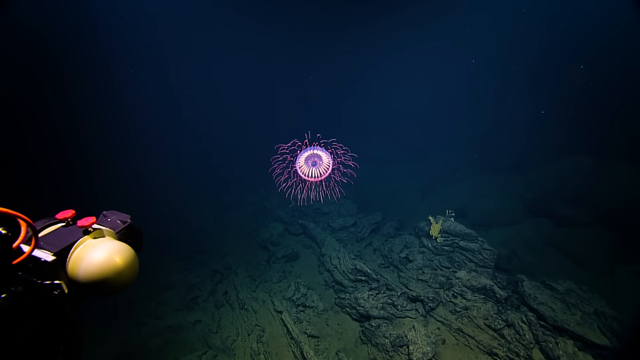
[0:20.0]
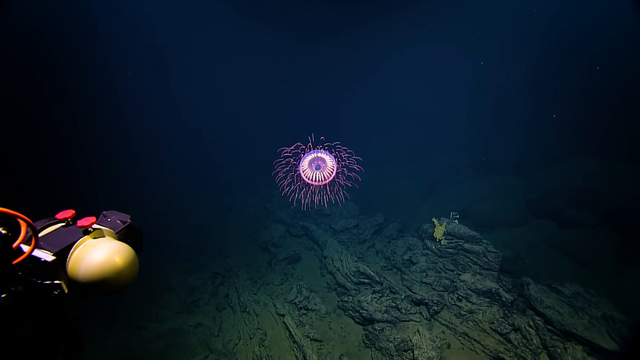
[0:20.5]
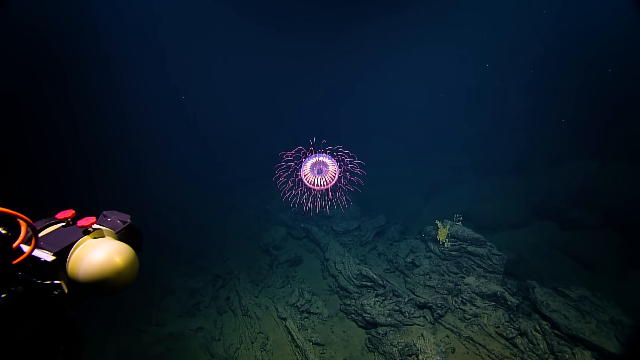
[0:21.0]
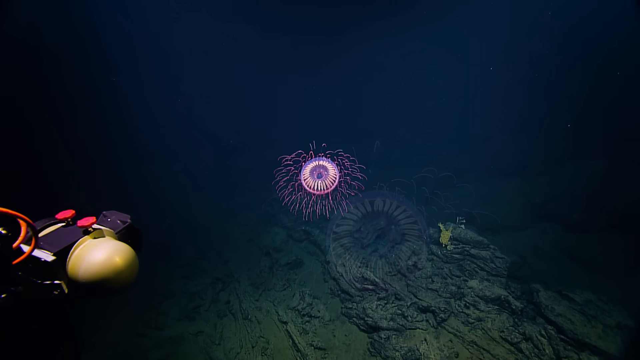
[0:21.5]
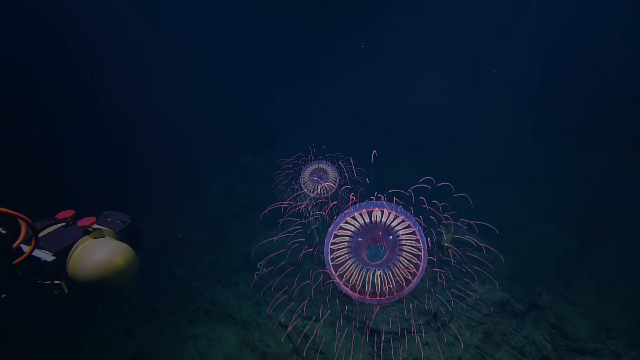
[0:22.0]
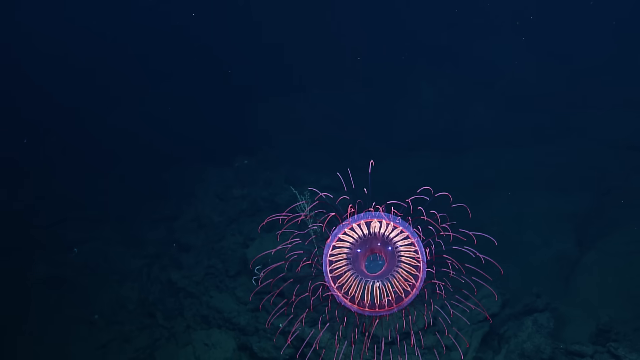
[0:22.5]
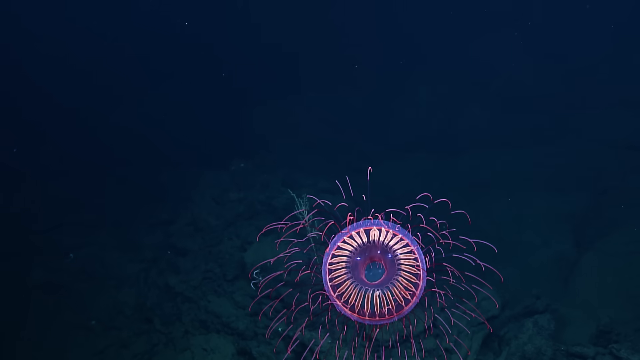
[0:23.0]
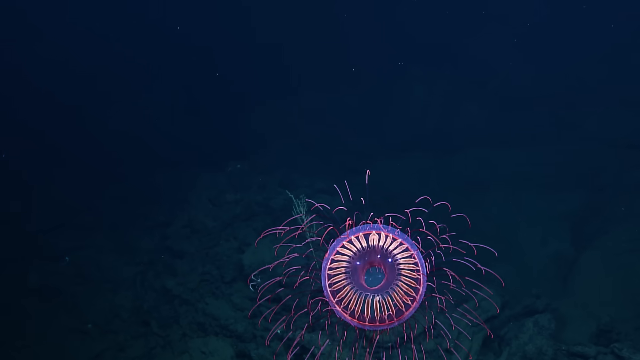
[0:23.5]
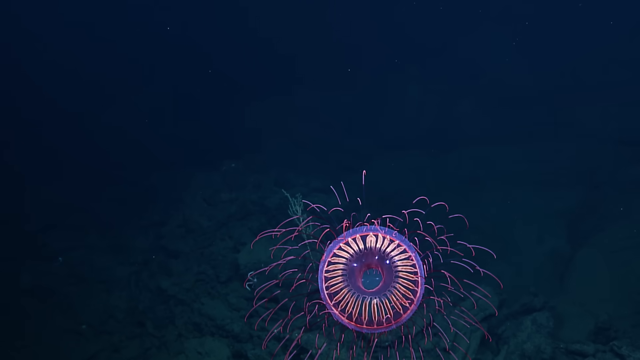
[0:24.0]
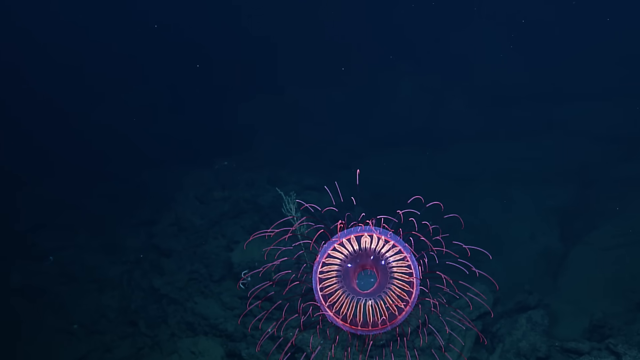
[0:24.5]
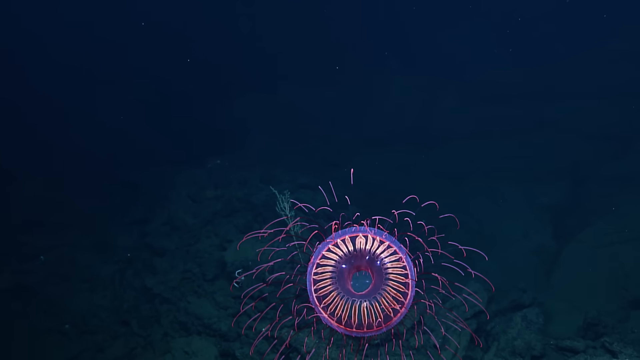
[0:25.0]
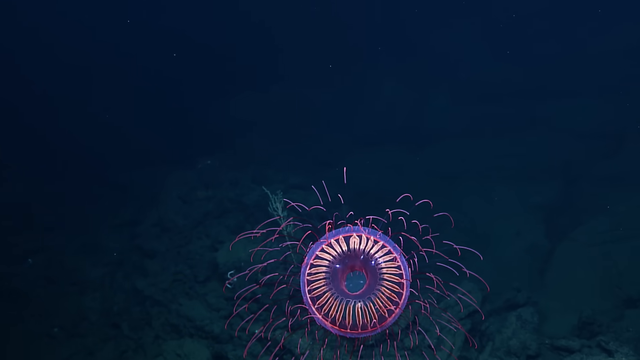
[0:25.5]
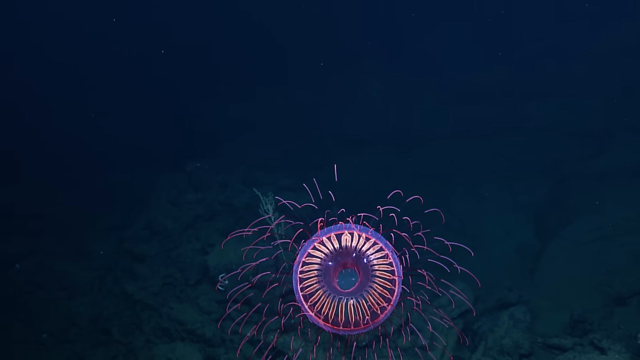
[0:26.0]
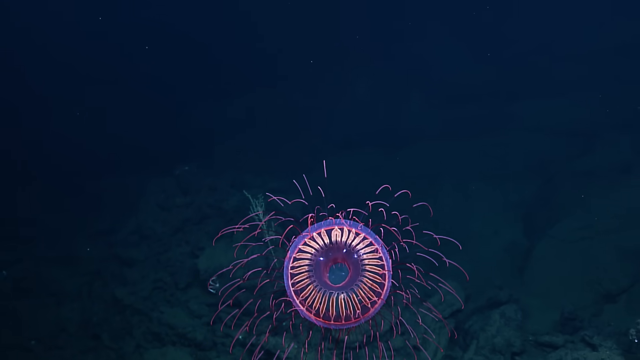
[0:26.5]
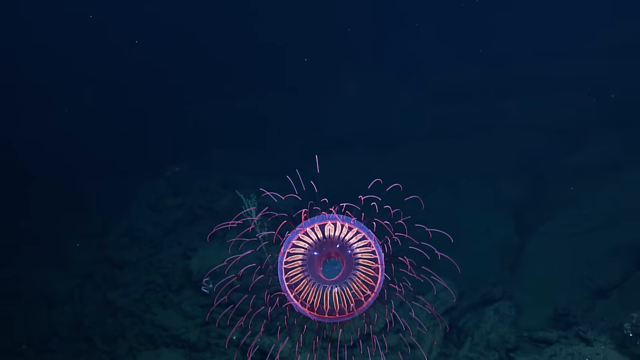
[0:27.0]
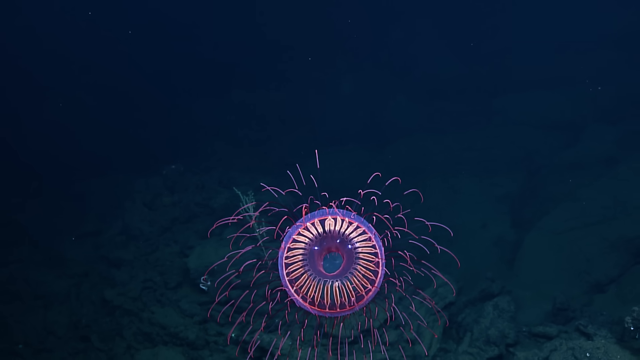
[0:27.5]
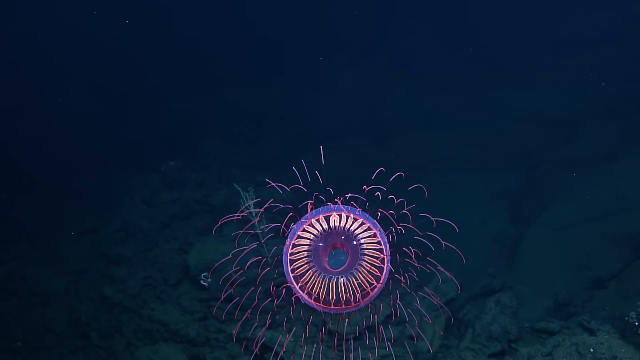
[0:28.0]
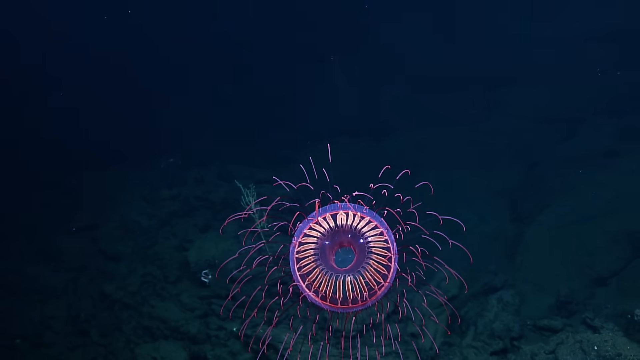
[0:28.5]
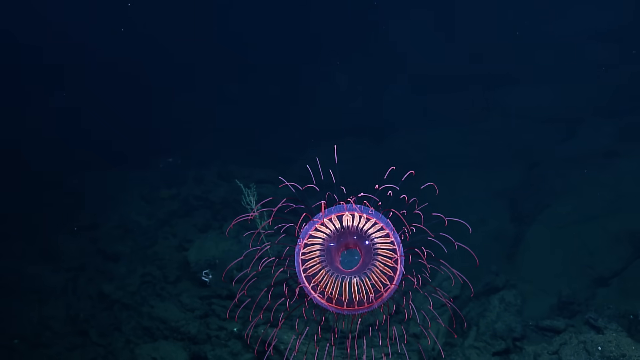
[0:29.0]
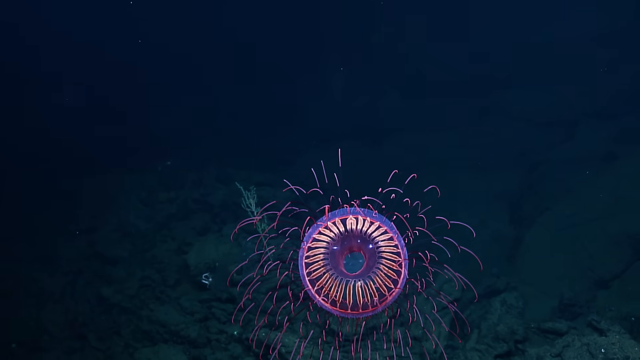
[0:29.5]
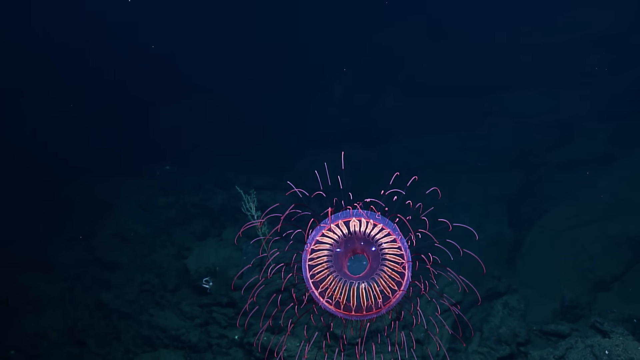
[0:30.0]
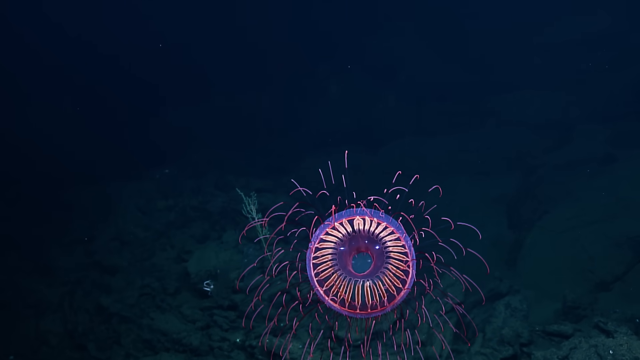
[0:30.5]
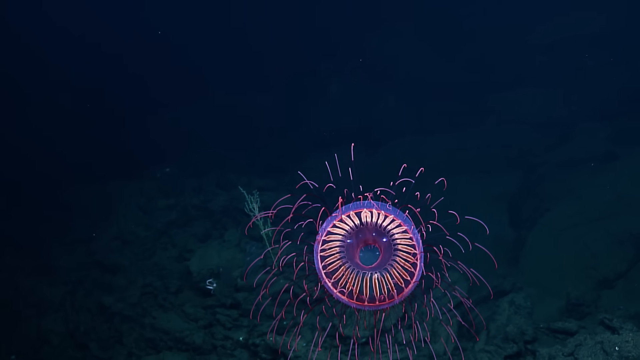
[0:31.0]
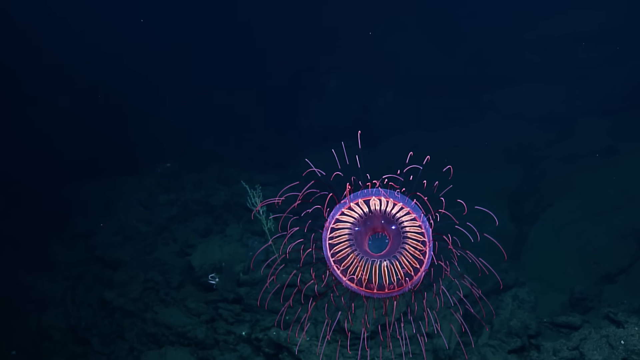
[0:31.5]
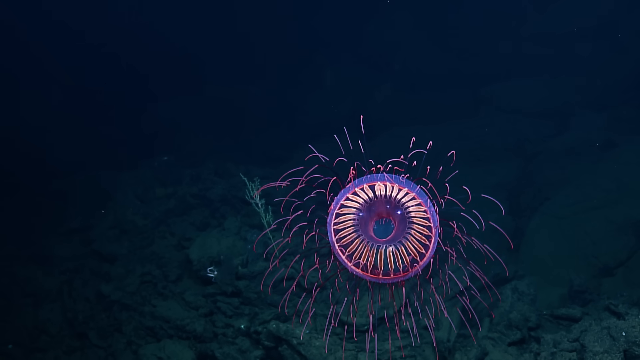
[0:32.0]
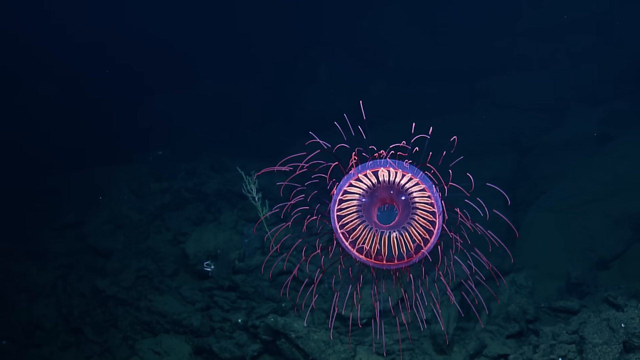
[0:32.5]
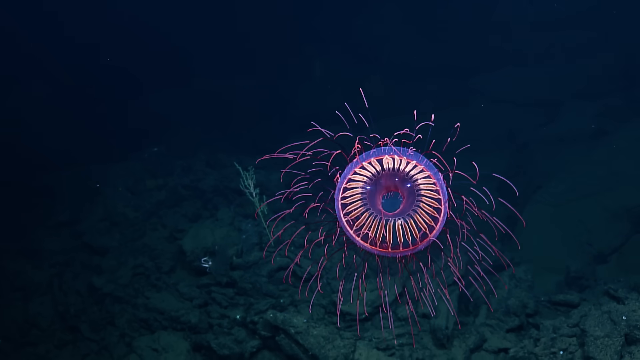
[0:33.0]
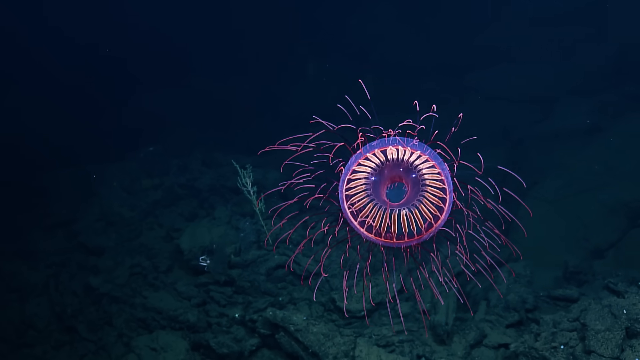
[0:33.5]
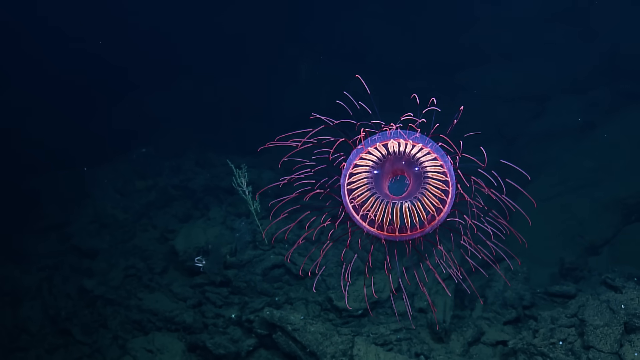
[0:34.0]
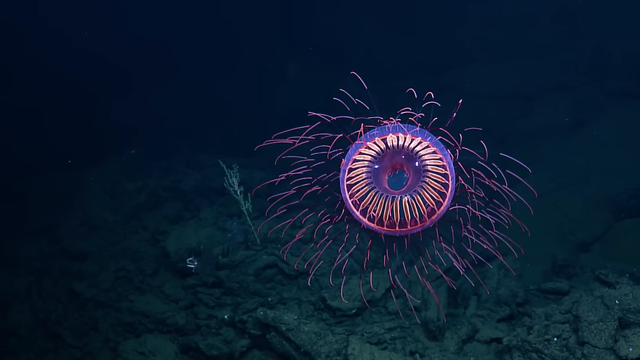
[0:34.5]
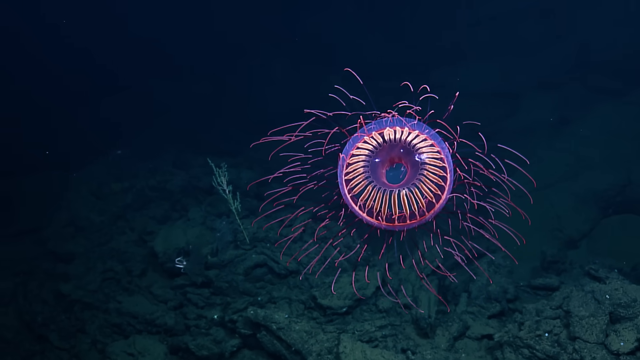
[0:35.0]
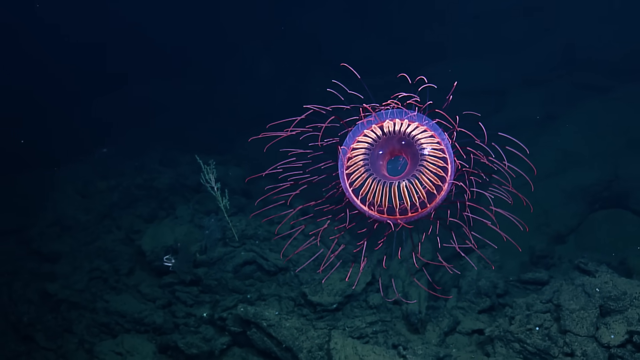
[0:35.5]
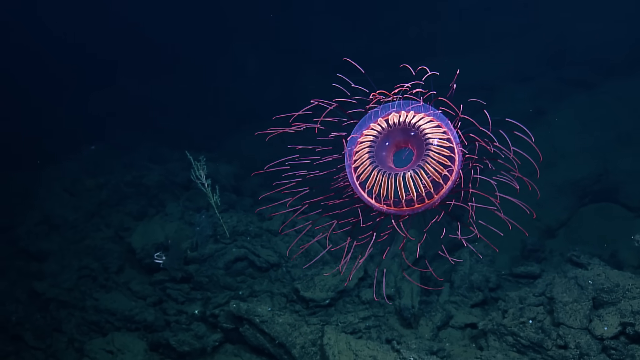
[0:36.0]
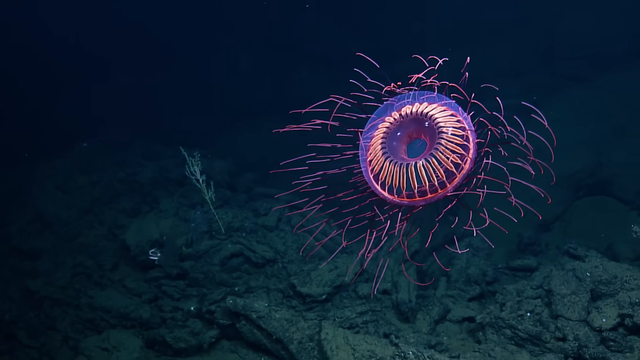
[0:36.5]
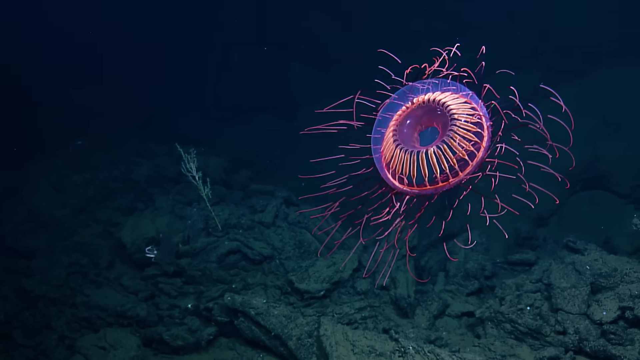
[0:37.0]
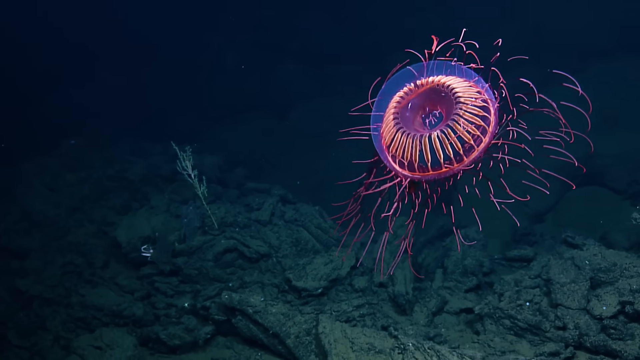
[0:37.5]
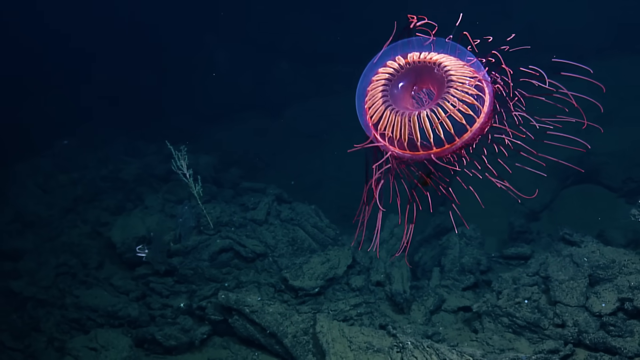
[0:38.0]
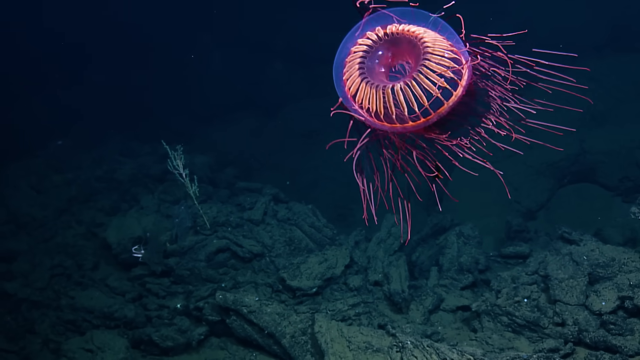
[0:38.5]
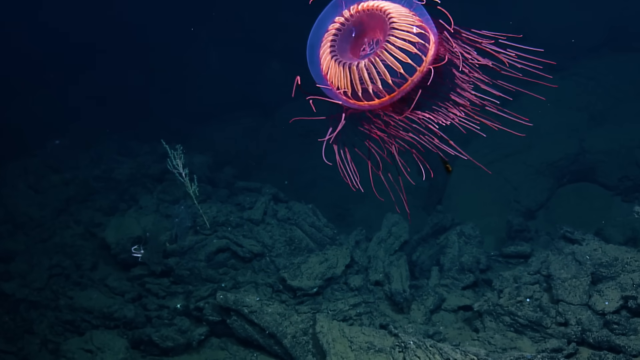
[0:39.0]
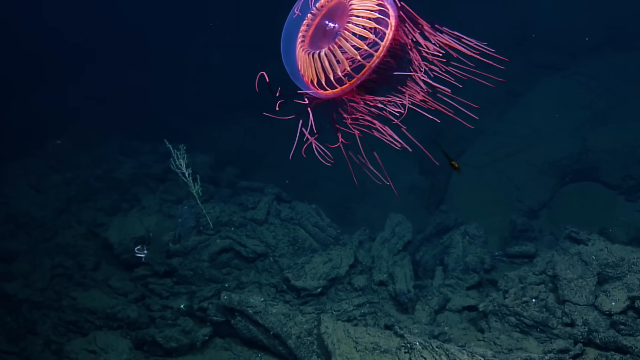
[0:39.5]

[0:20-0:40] The jellyfish is seen straight head on, facing the front of the screen. Shaped like a donut, it has a hole in the middle through which the water is visible. It floats for a while, then does a diagonal upward turn rotation to the right, revealing its jellyfish shape as it now faces the left side, with its tentacles flowing toward the right. The turn gives a 3D effect, showing that the jellyfish is three-dimensional.